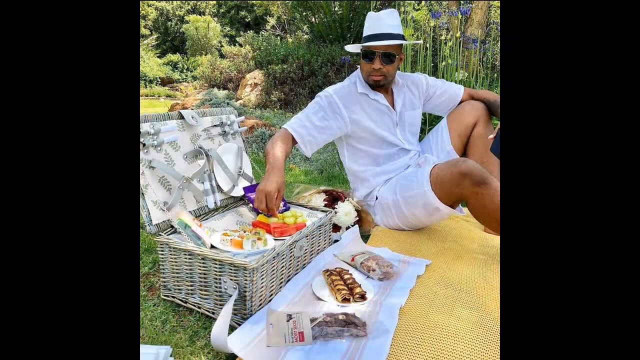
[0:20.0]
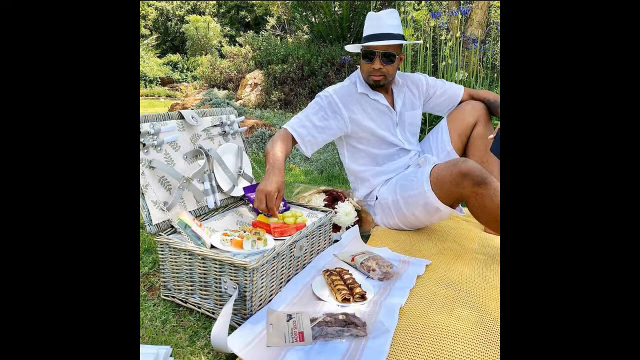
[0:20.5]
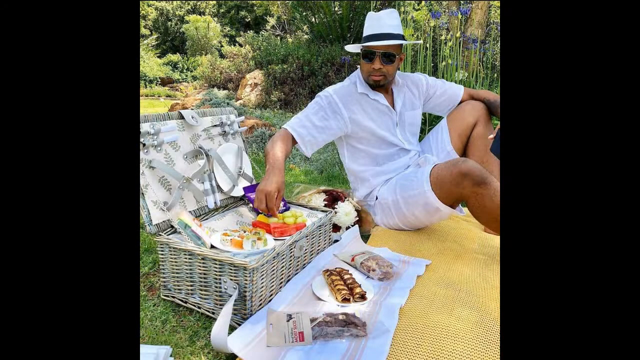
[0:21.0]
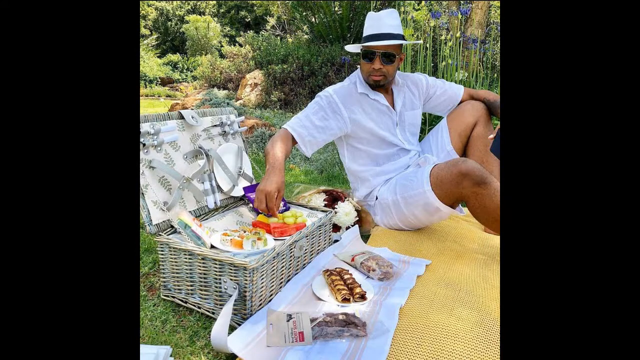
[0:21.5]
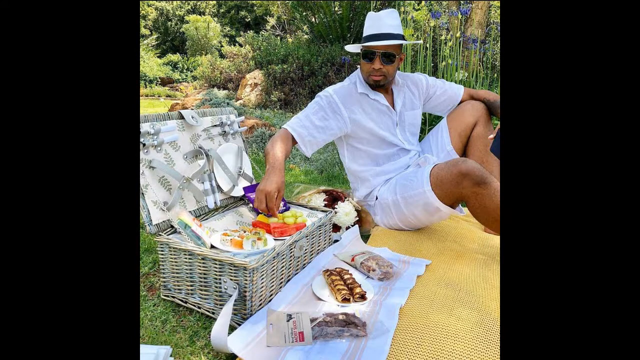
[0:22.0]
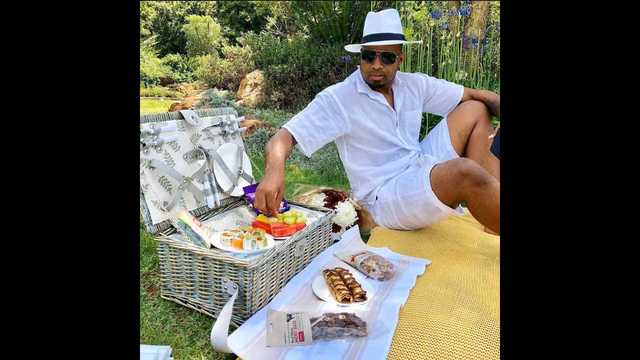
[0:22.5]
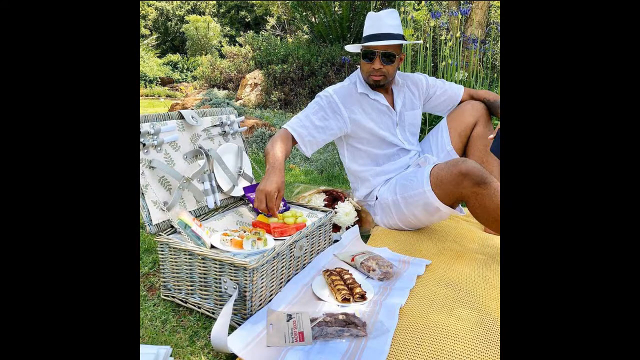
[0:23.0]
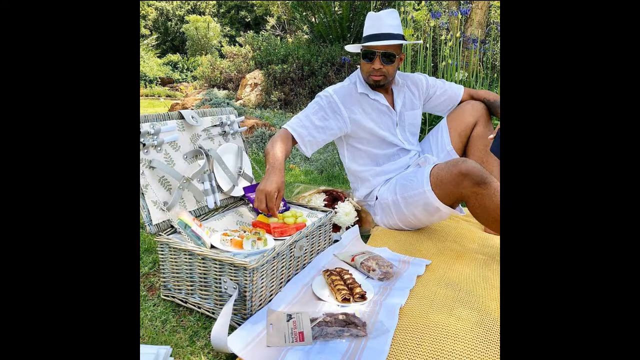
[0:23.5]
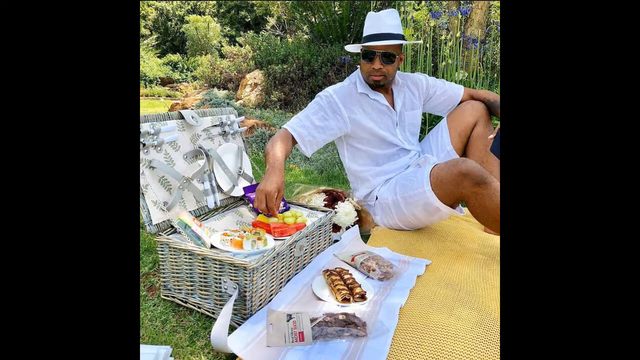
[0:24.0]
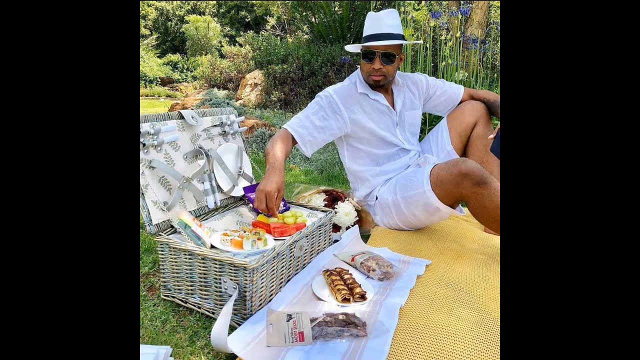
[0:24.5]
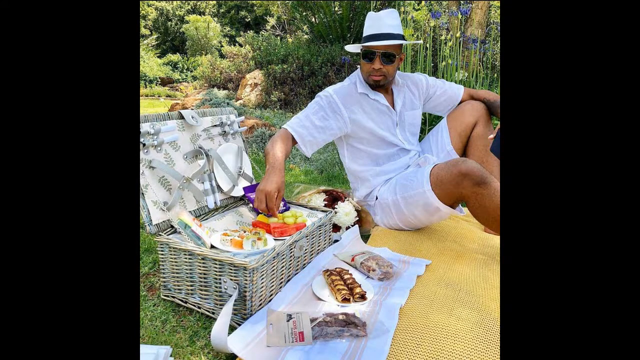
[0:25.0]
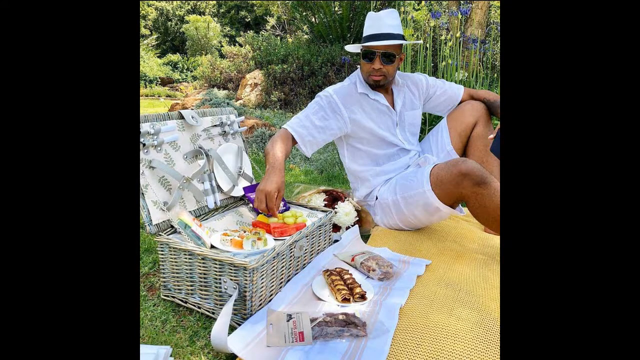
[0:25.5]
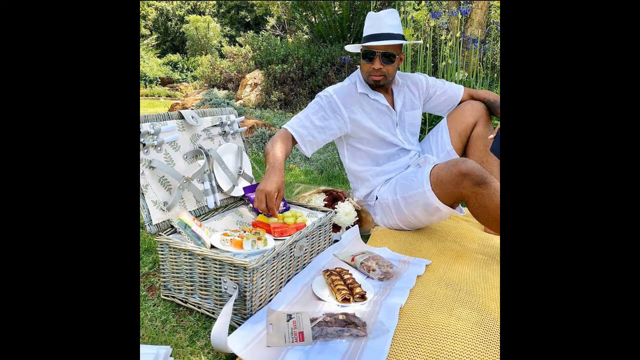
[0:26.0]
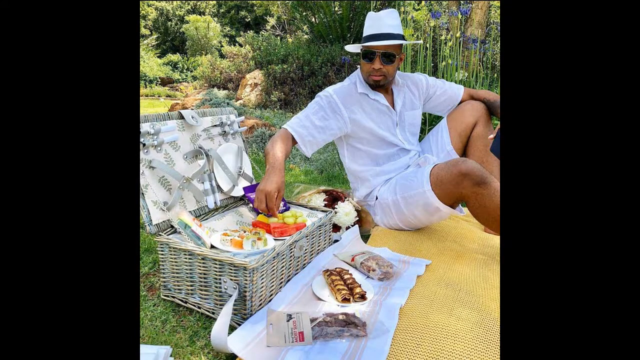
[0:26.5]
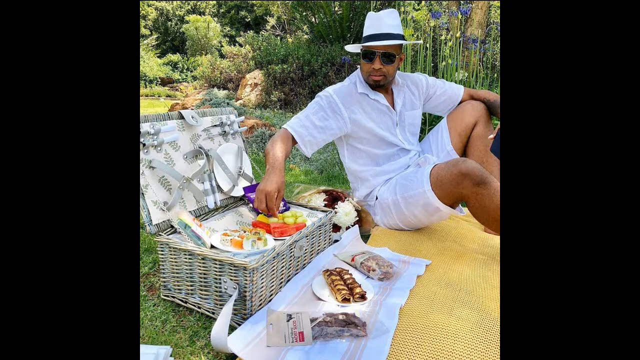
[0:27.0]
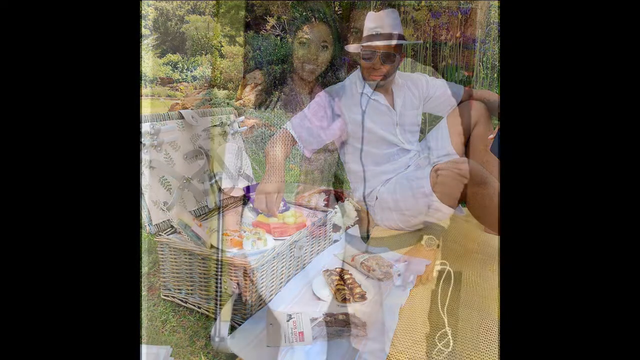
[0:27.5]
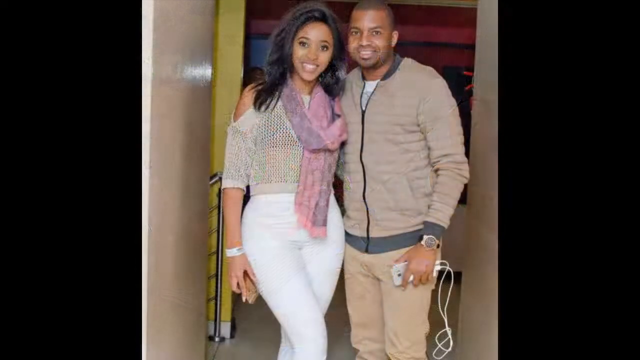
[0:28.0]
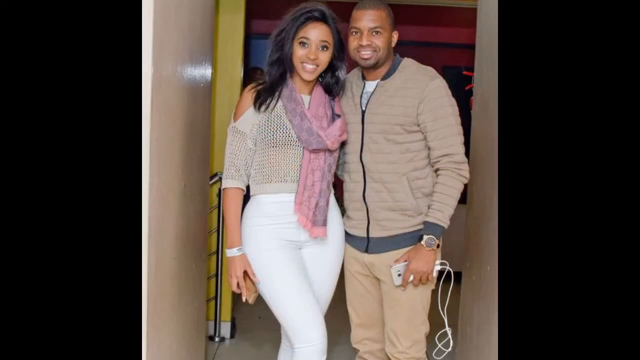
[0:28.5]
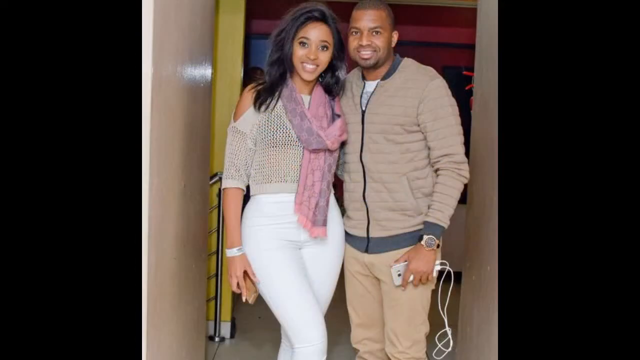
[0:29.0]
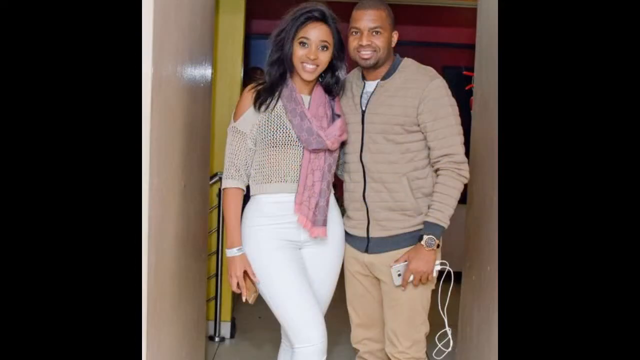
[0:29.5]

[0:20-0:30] There is a view of what looks like a picnic. A man with dark skin is dressed in all white and wears sunglasses or shades. He is apparently sitting on a cushion and eating from the picnic basket, seemingly grapes or some similar green round fruit, and he looks very focused. Right in front of him, on his right side, there is what looks like meat and some pies, and something that looks like chocolate in purple packaging, apparently Dairy Milk chocolate. He wears a white hat with some black on it, and he holds something that looks like a phone in his left hand.